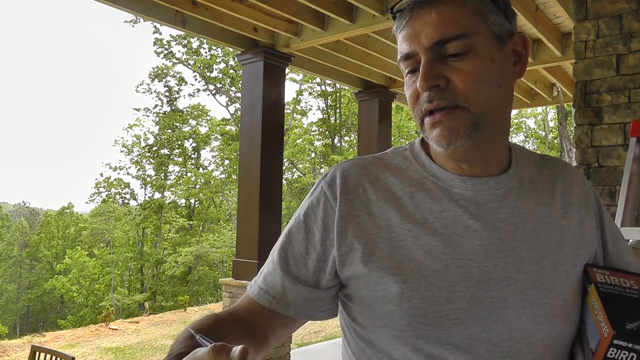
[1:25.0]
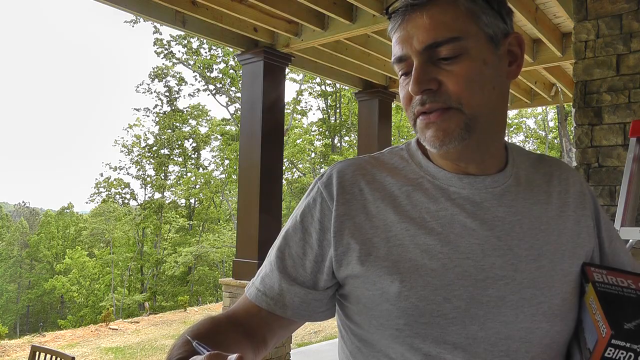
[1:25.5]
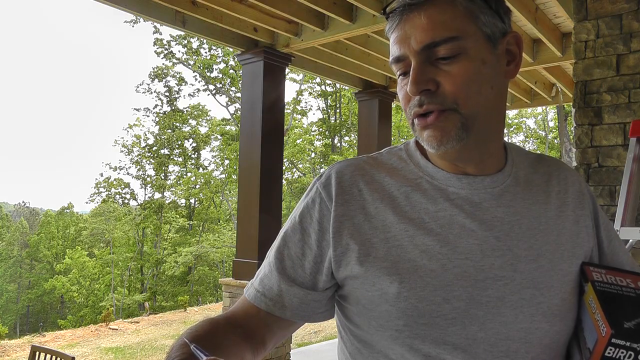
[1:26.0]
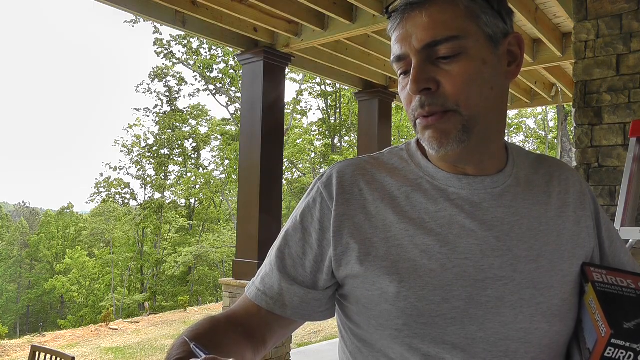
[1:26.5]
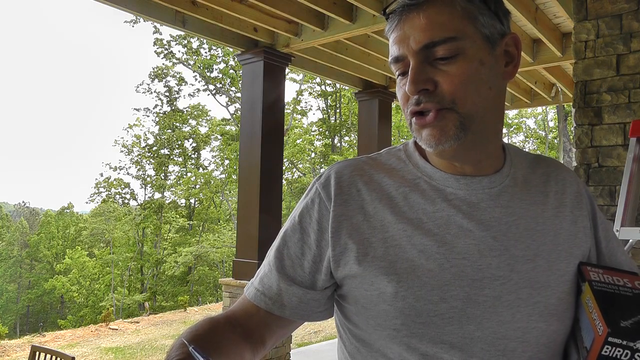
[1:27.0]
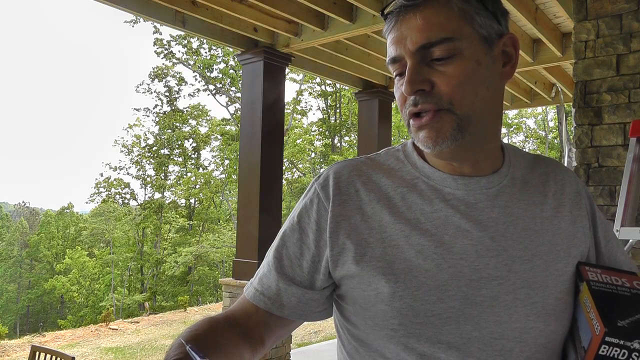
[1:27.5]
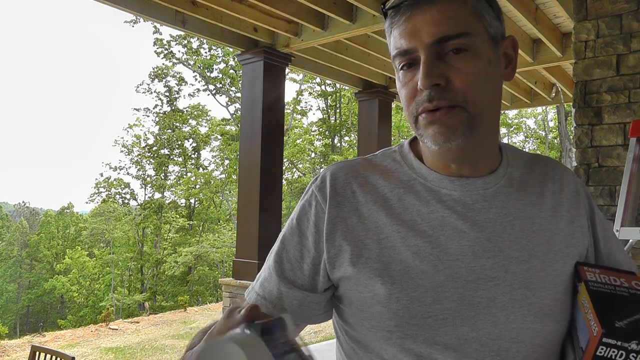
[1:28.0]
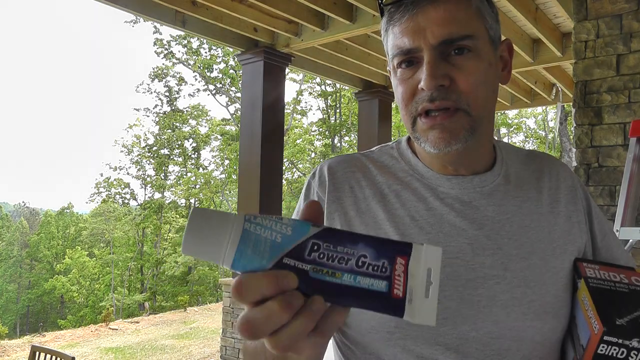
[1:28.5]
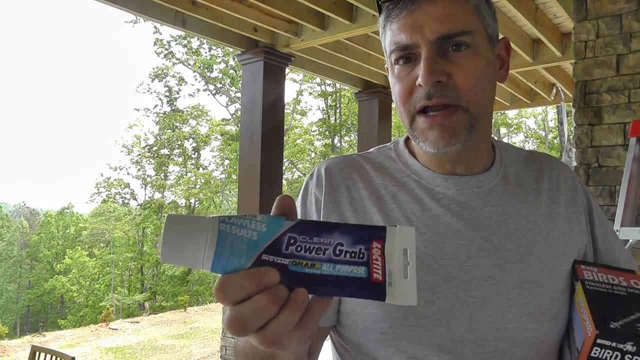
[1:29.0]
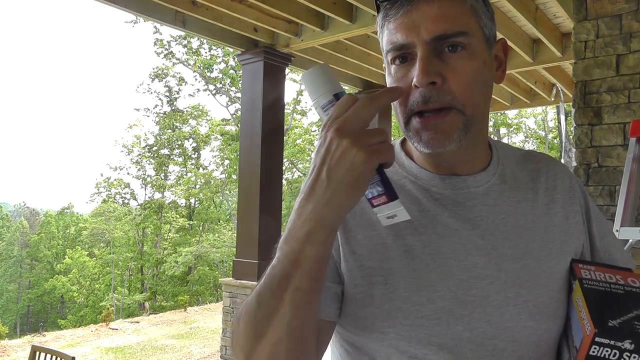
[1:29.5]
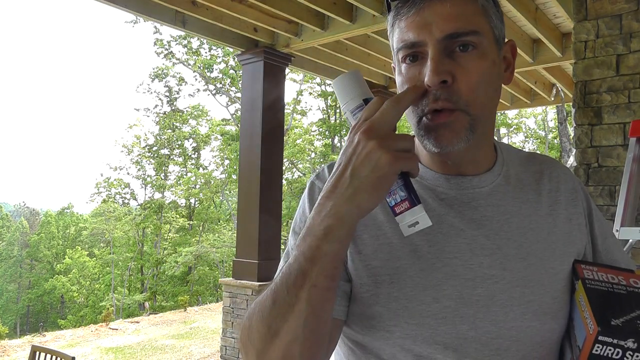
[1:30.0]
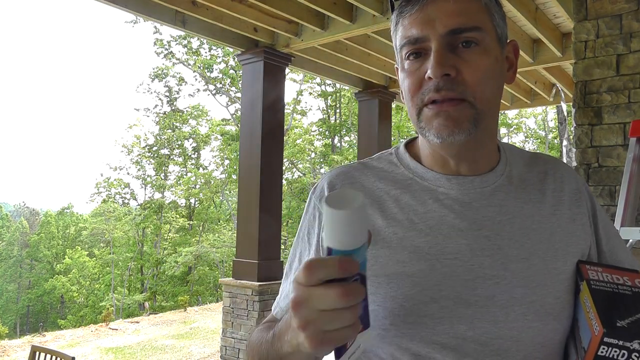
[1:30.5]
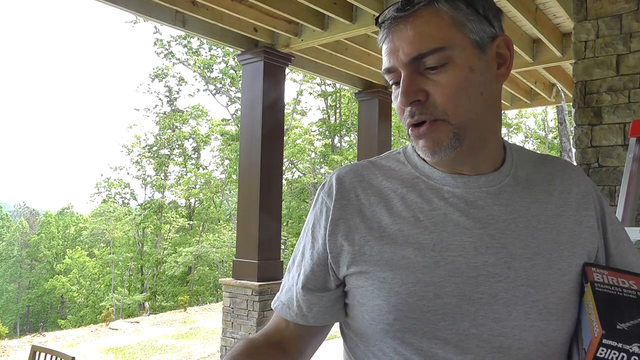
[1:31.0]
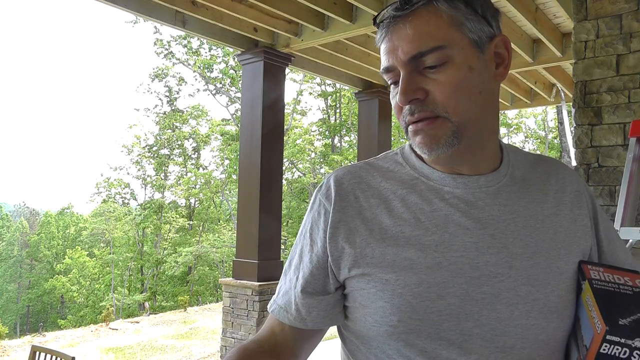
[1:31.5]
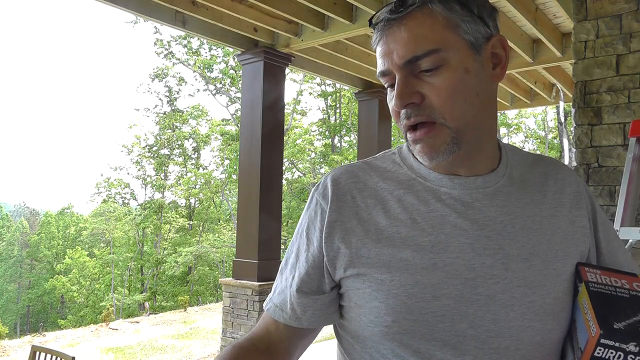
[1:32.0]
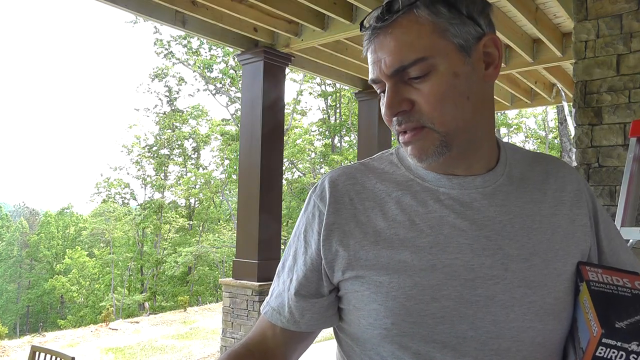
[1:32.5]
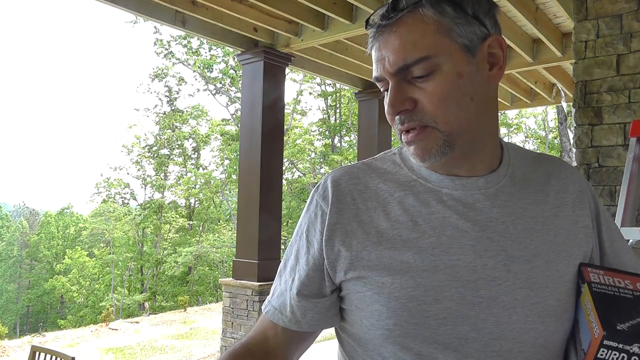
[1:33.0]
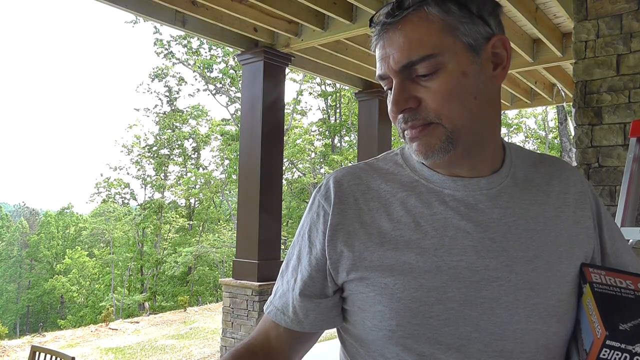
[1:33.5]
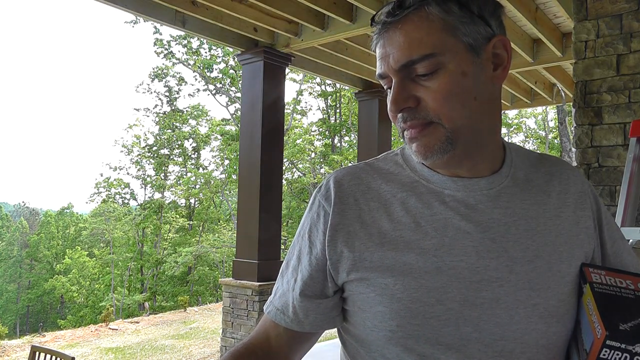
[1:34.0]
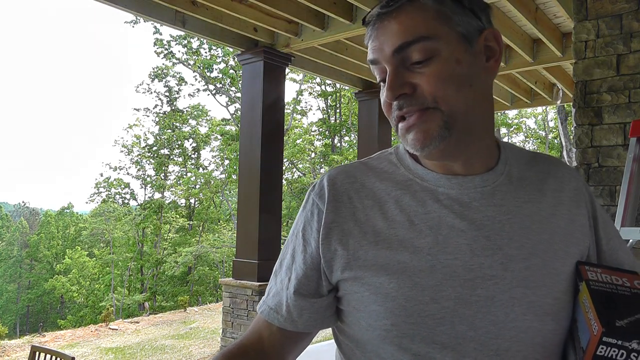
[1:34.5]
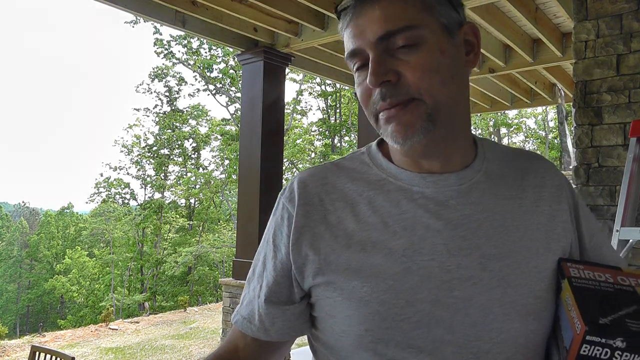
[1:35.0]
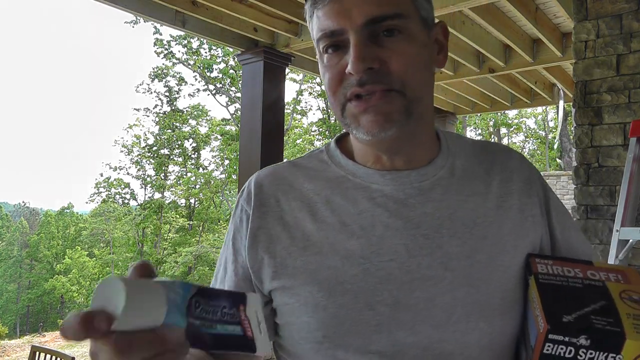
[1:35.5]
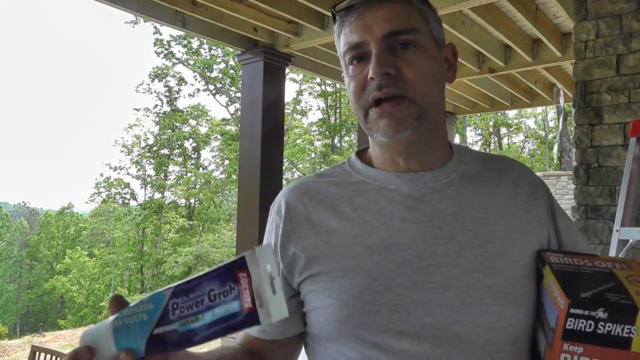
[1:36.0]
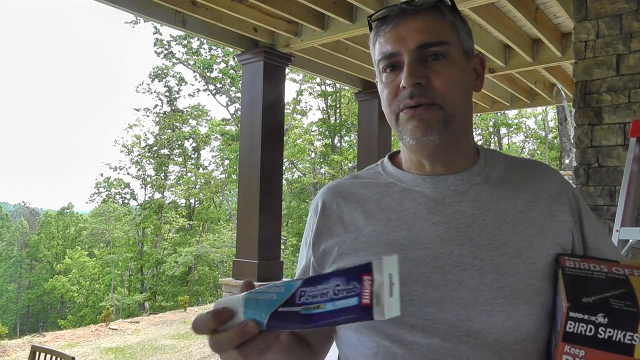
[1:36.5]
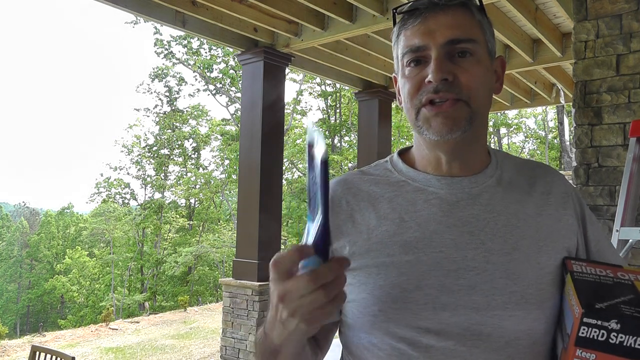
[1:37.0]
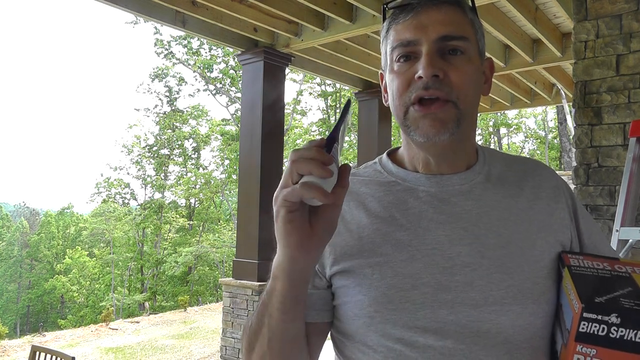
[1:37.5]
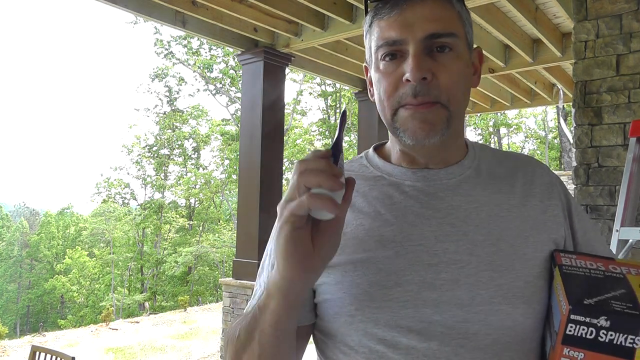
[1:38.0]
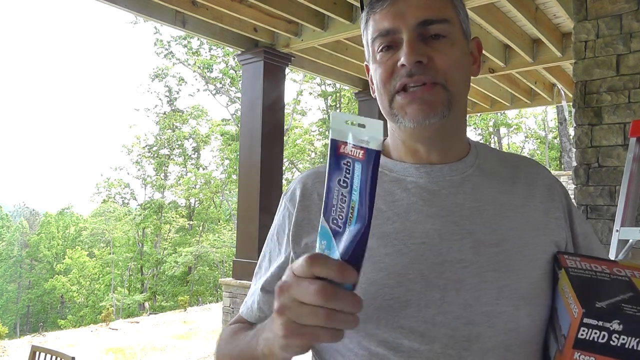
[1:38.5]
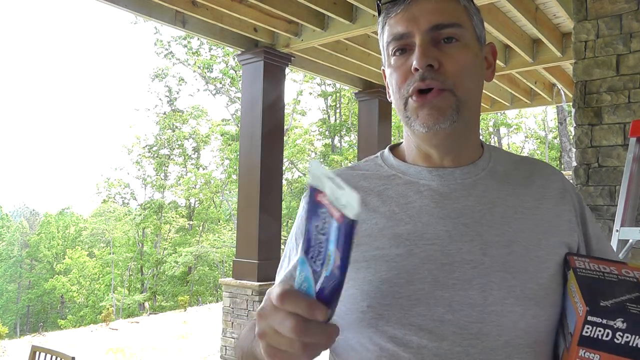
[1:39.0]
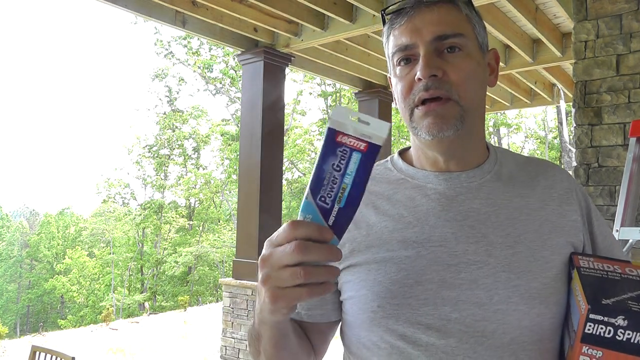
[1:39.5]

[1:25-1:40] A man in his late 40s wearing a white t-shirt stands on a front porch, talking to the camera and reading from a product called Power Grab in his hand. It appears to be an adhesive he is going to use to affix the Birds Off product he holds in his other hand. It appears to be early spring. An aluminum ladder is in the background behind him, along with green trees and some brown grass. Mylar strips hang from the ceiling of the porch, blowing in the wind.